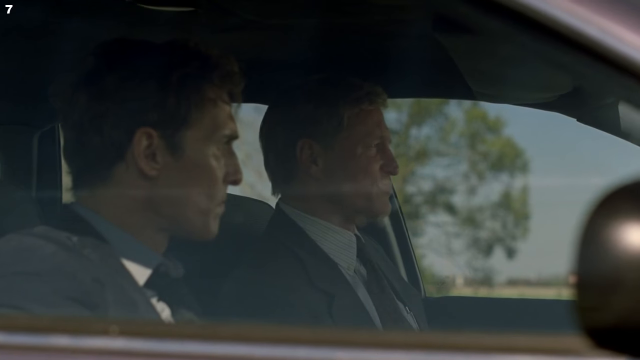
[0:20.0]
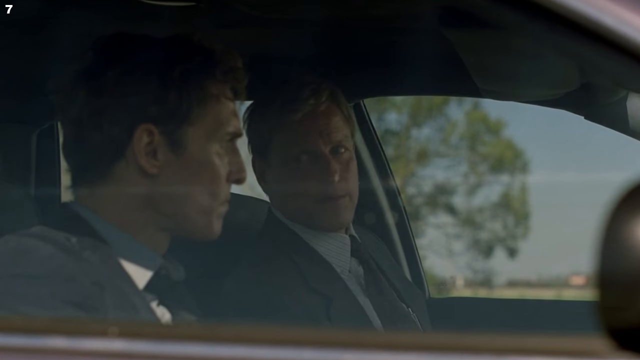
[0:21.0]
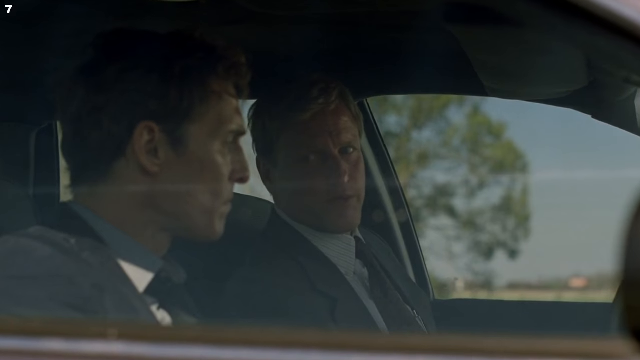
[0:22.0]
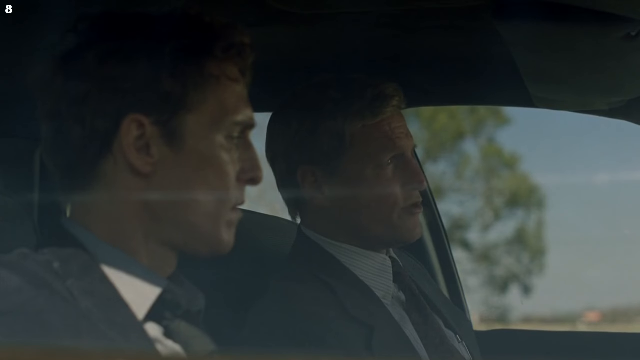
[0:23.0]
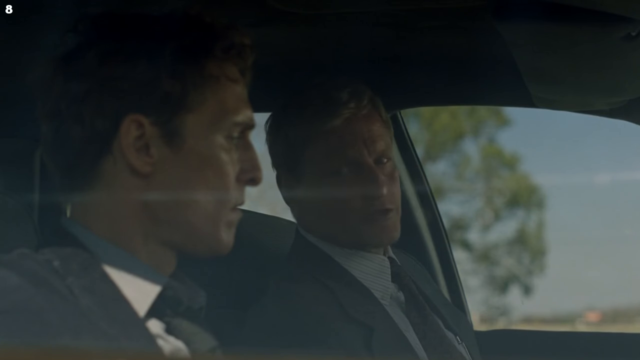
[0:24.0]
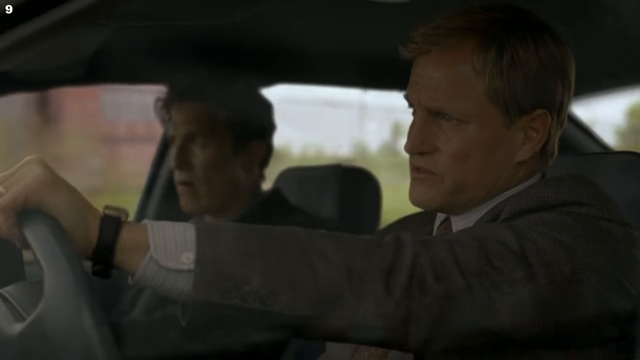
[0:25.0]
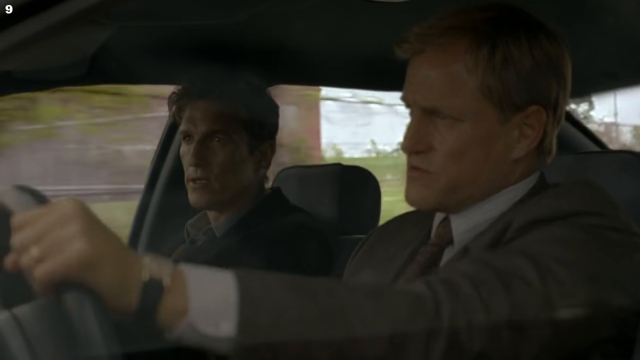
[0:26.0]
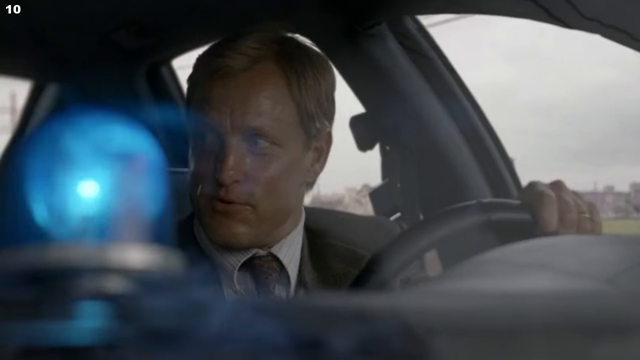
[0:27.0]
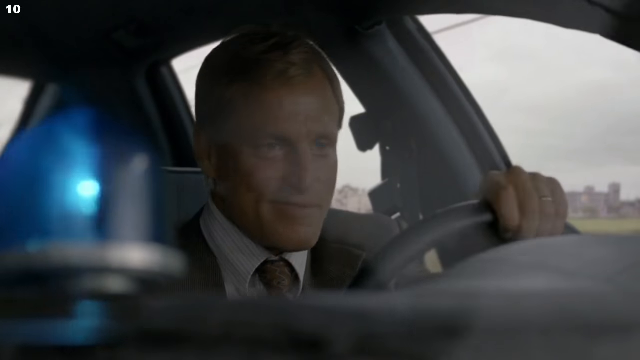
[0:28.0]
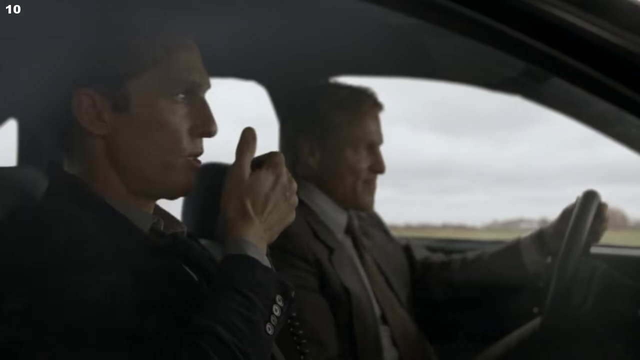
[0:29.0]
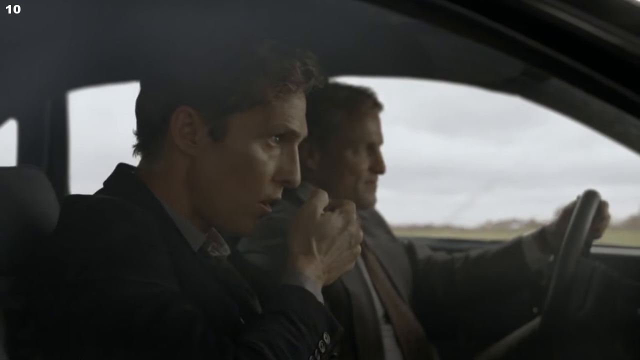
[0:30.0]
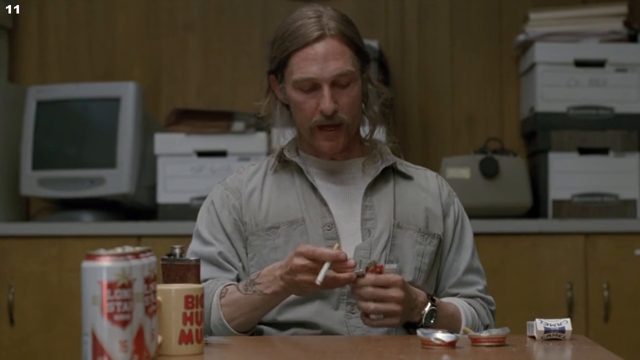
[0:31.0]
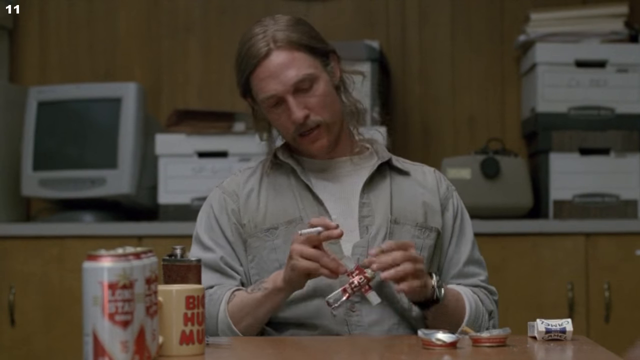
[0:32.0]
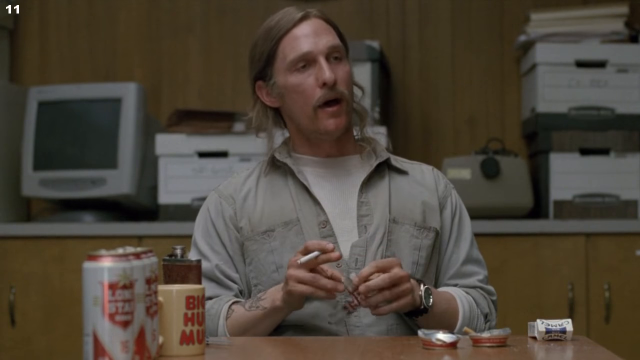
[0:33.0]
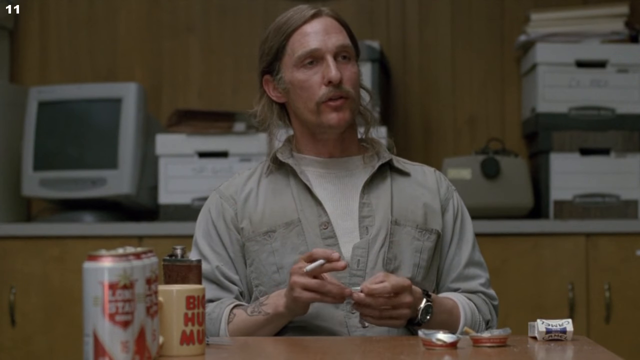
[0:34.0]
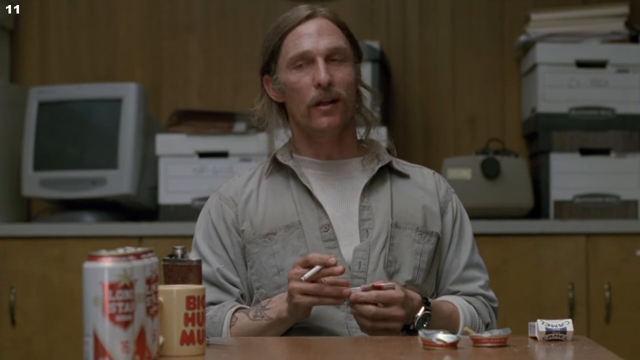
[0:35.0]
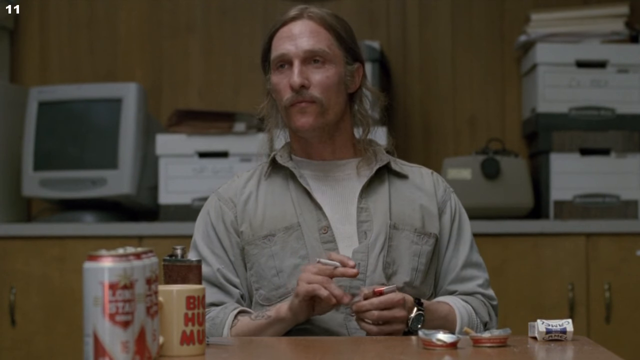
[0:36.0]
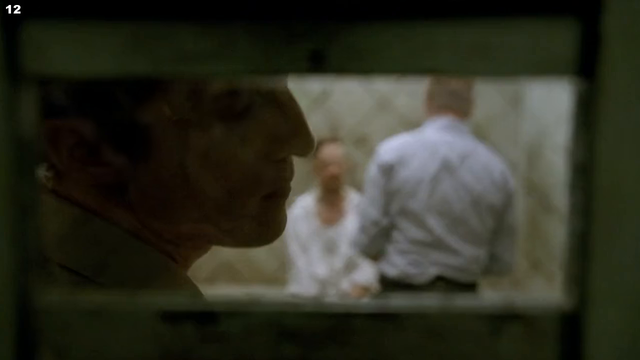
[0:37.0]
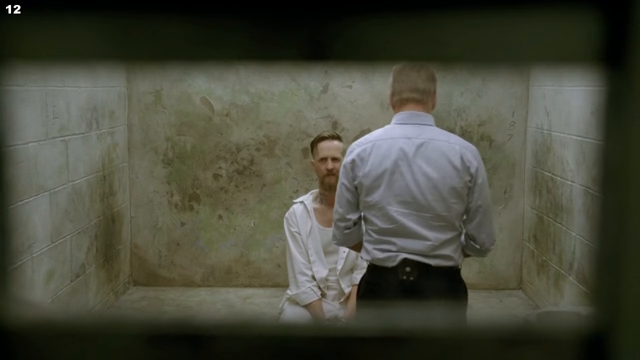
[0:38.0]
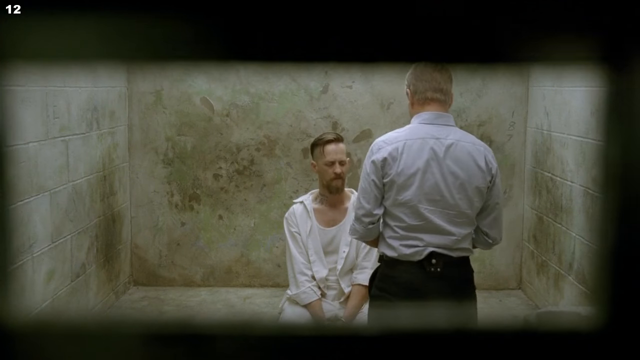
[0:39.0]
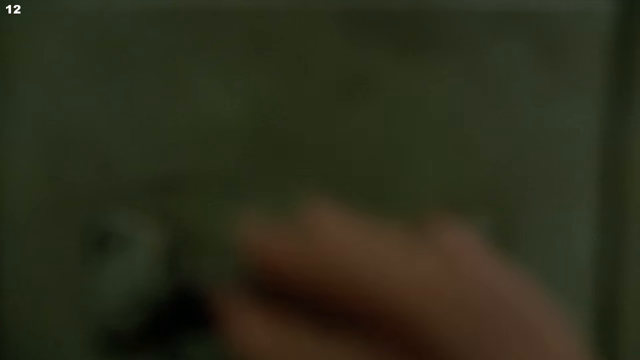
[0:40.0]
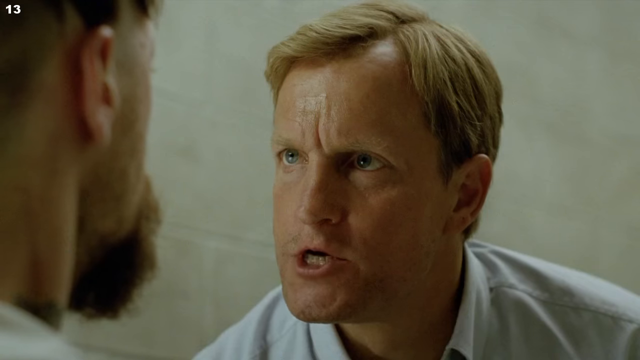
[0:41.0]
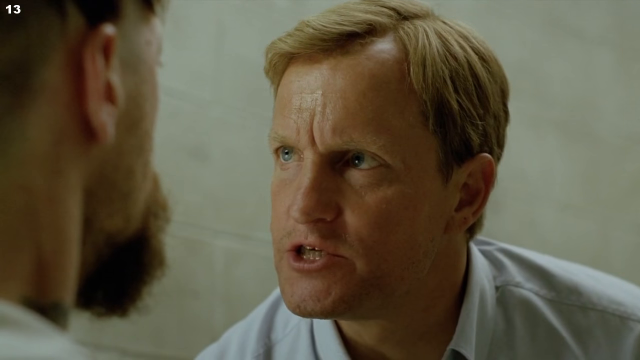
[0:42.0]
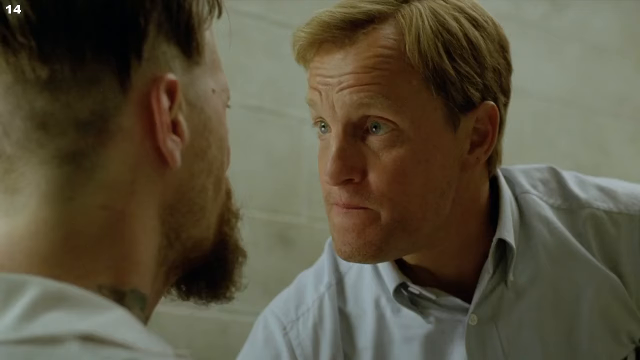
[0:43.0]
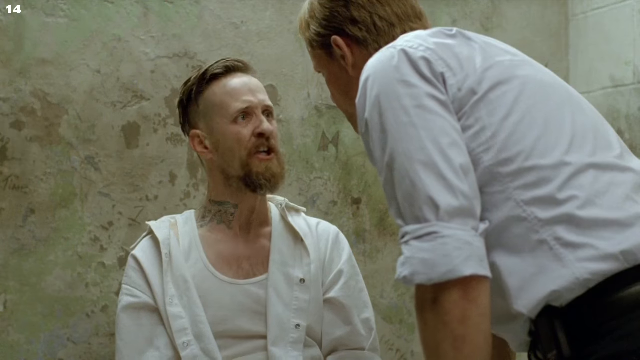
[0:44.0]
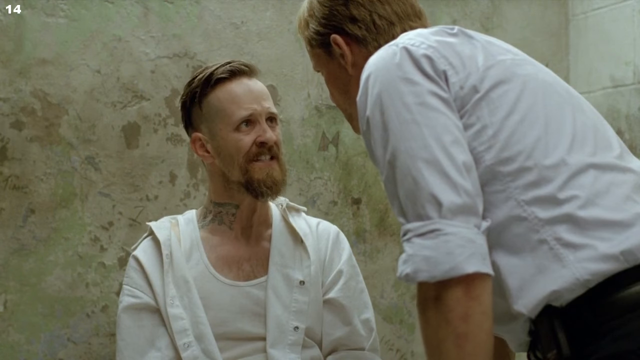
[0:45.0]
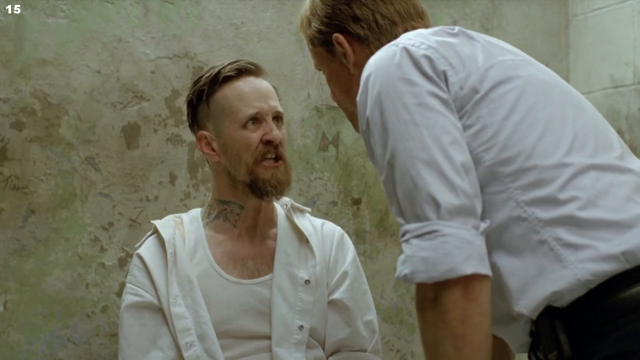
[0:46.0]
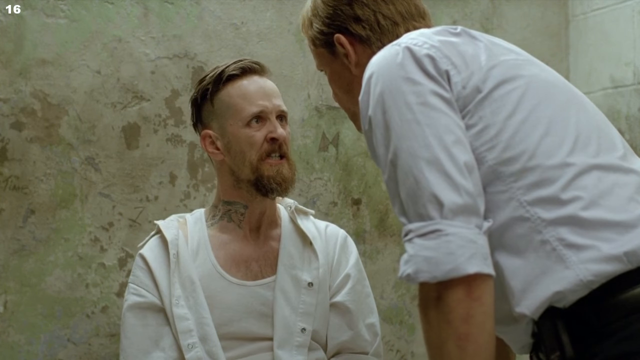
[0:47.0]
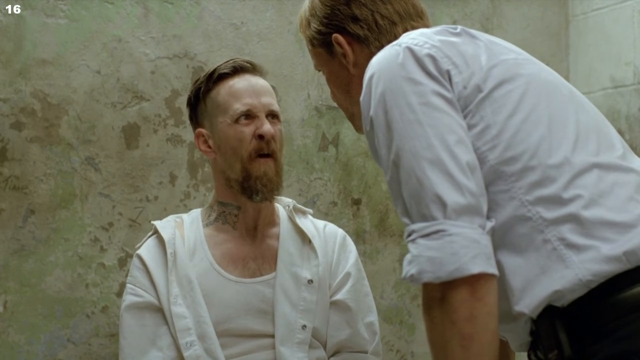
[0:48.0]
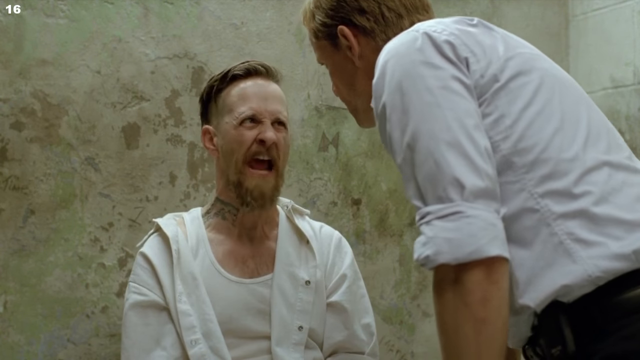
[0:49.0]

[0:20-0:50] In the car, one man listens to the one who is not driving, and police are visible as one of them talks to someone. A man with a beard and long curly hair holds a cigarette, with alcohol and drugs on his table; behind him are laptops, printers, papers and files. In a room in a prison, someone is being brought in, and a warden or police officer is torturing another man. The prisoner and the police officer argue, exchanging harsh words, keeping very strong eye contact, and shouting and screaming at each other.